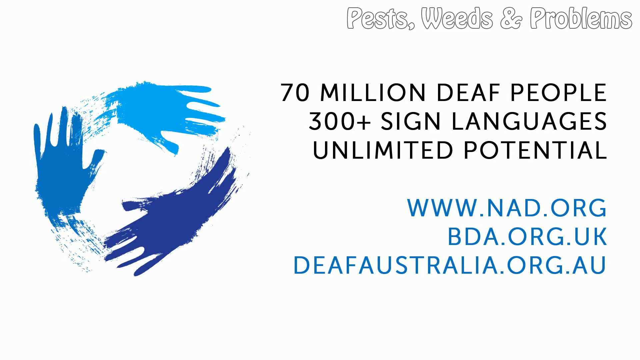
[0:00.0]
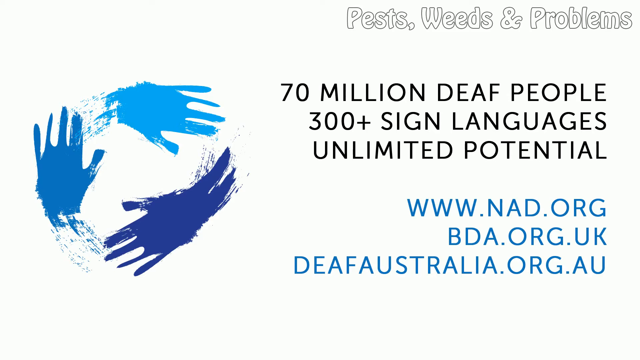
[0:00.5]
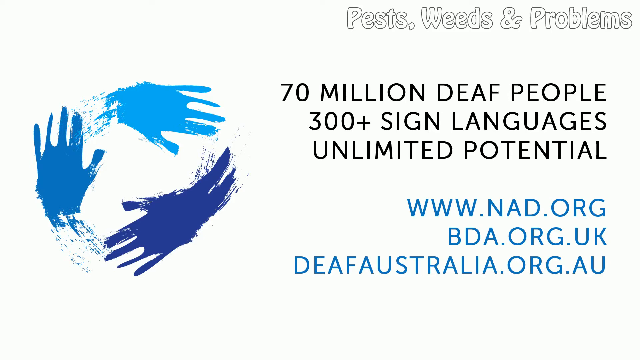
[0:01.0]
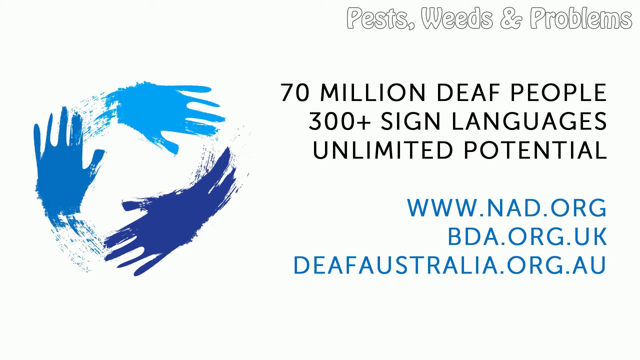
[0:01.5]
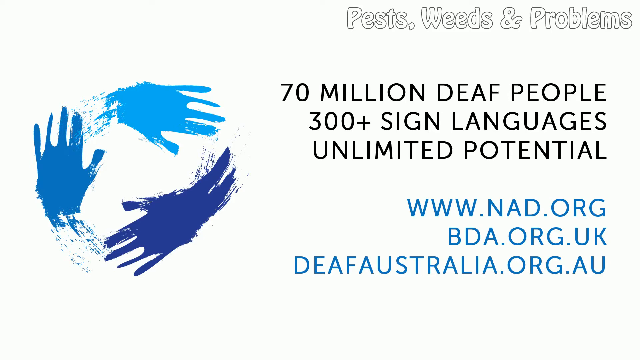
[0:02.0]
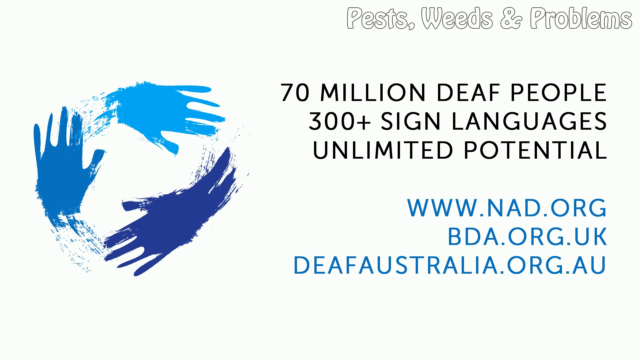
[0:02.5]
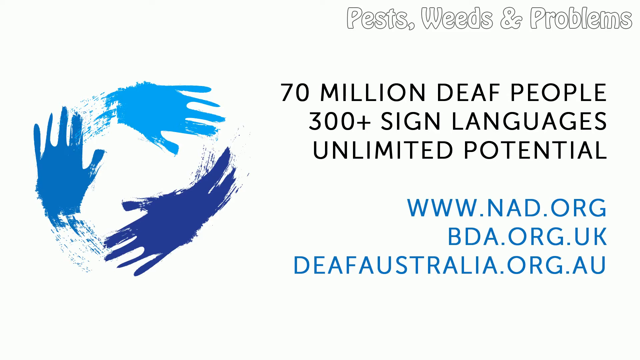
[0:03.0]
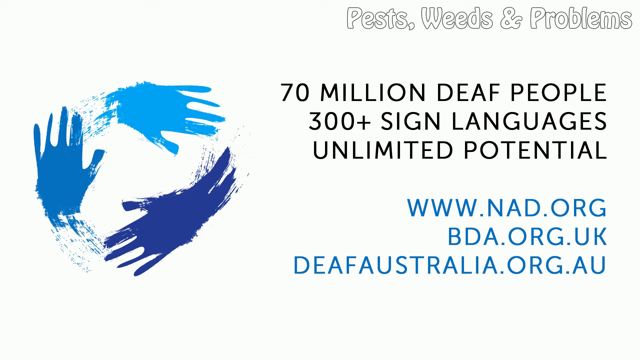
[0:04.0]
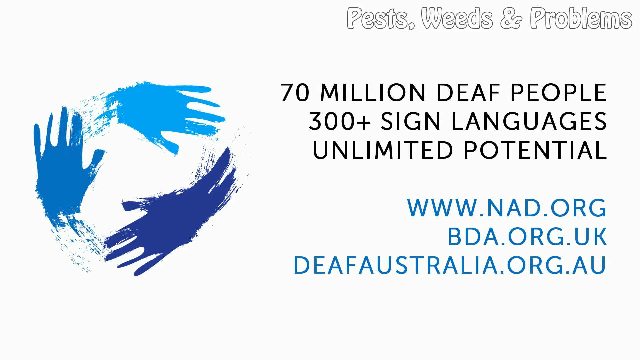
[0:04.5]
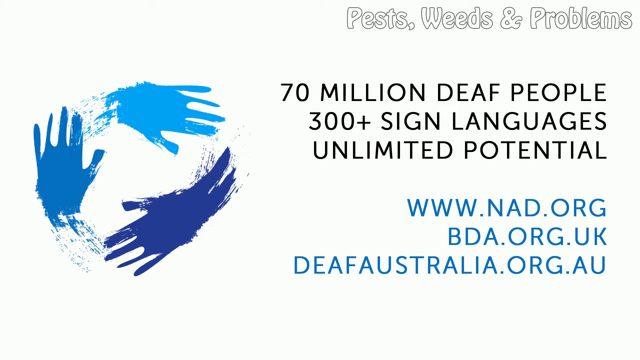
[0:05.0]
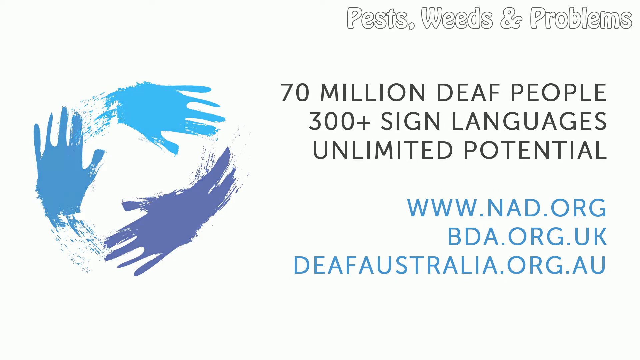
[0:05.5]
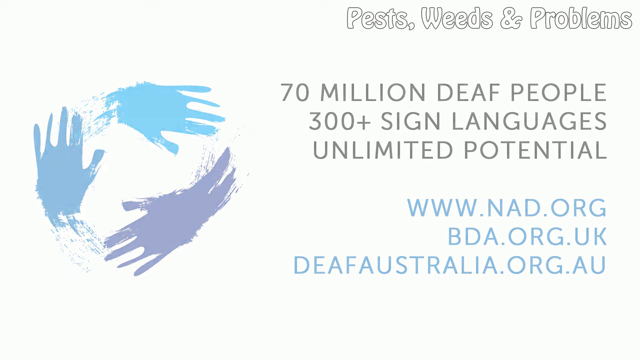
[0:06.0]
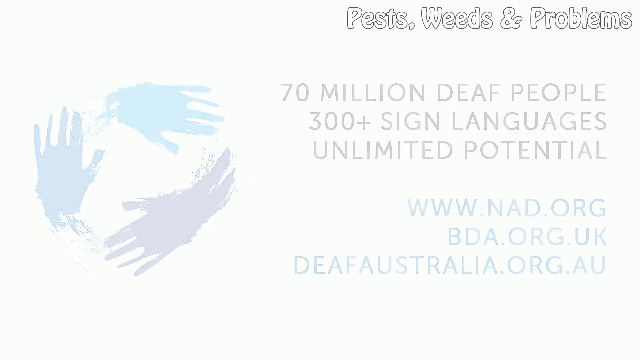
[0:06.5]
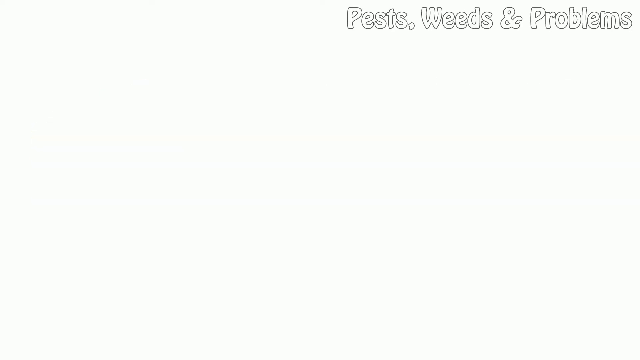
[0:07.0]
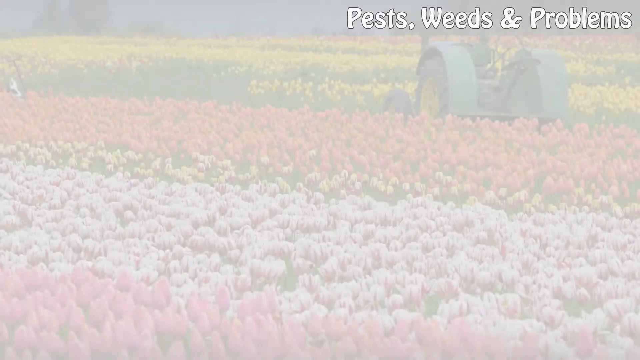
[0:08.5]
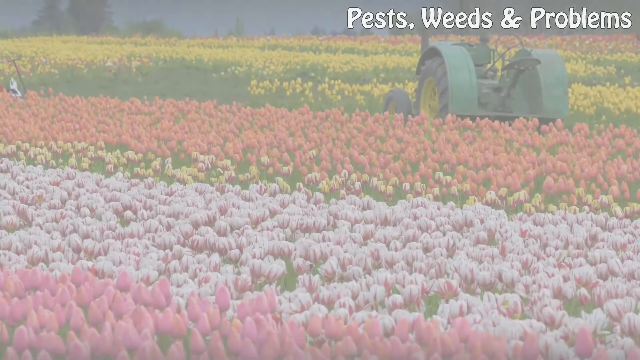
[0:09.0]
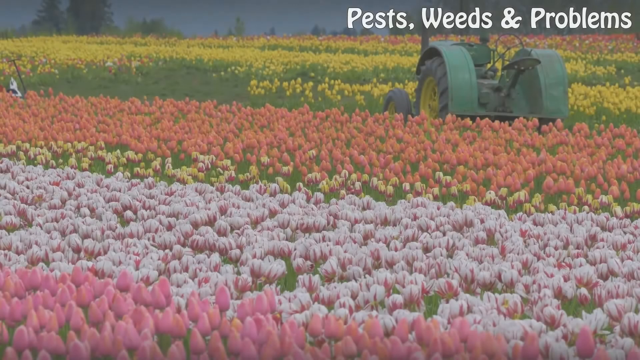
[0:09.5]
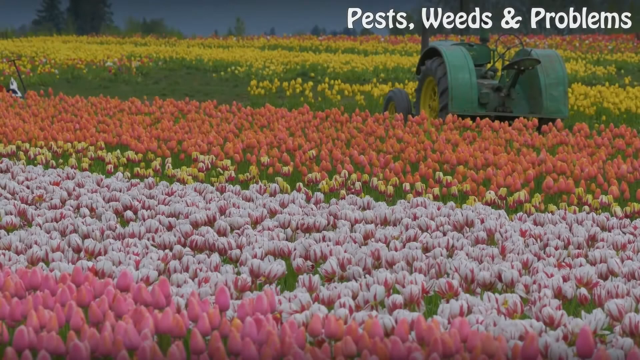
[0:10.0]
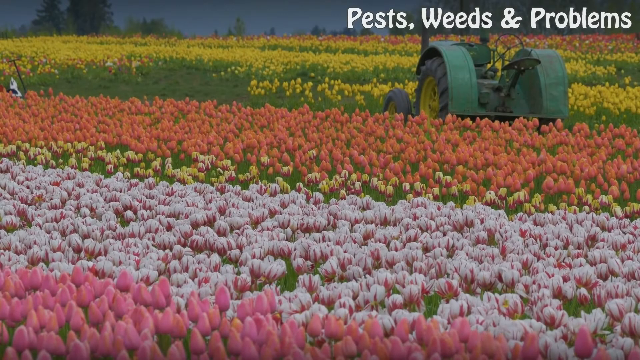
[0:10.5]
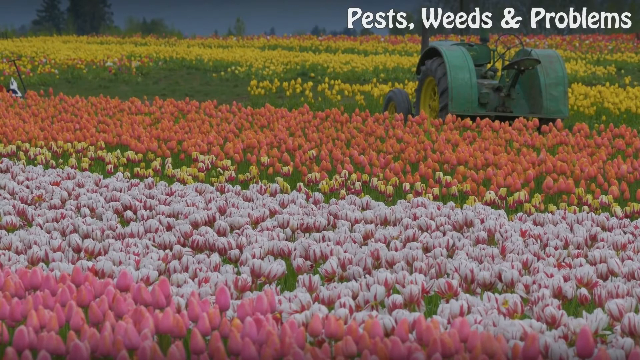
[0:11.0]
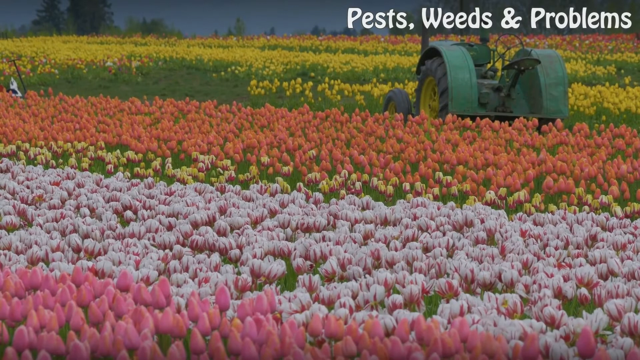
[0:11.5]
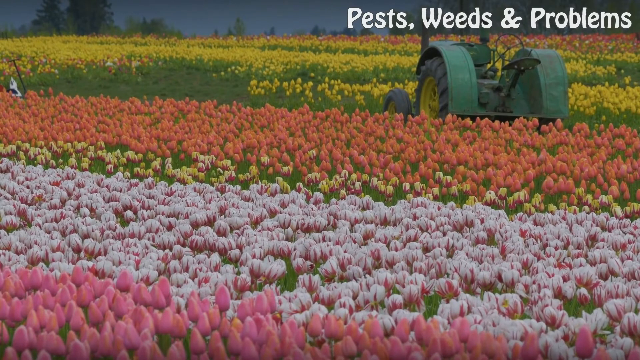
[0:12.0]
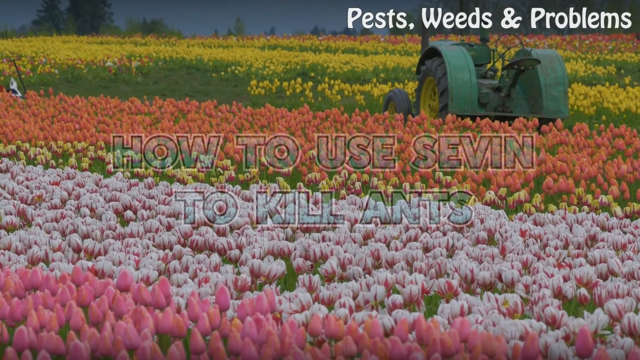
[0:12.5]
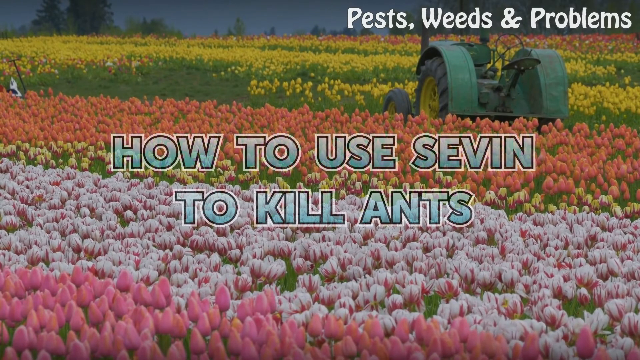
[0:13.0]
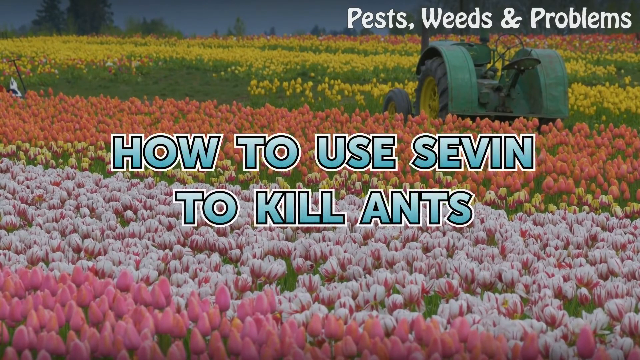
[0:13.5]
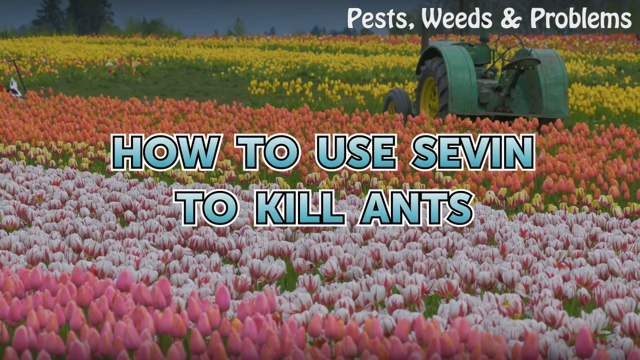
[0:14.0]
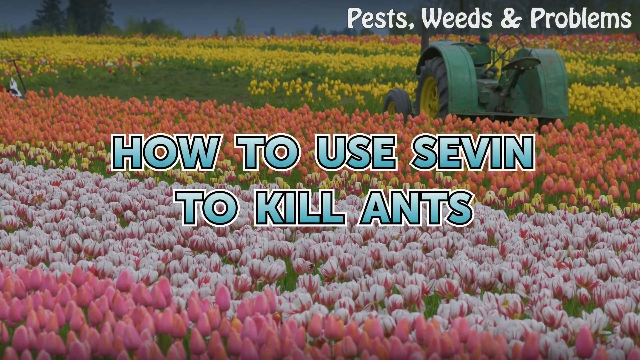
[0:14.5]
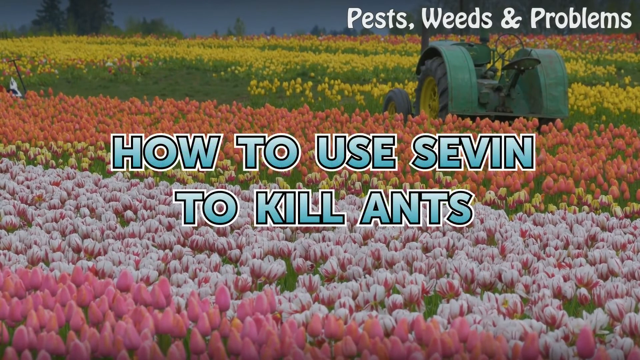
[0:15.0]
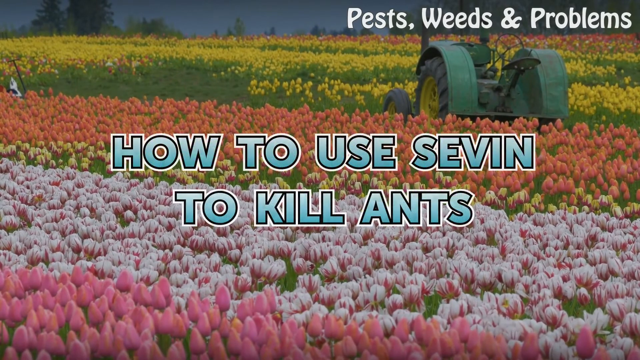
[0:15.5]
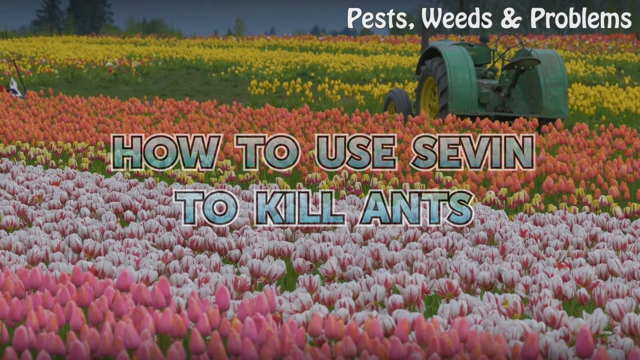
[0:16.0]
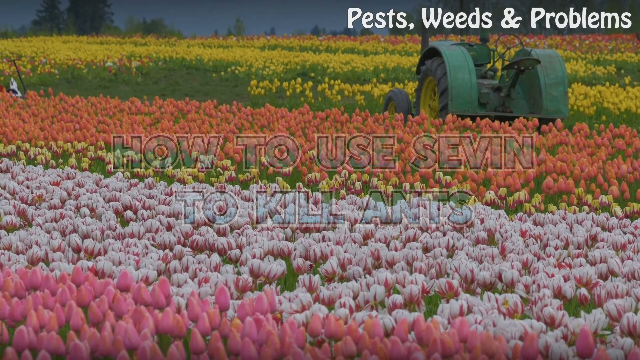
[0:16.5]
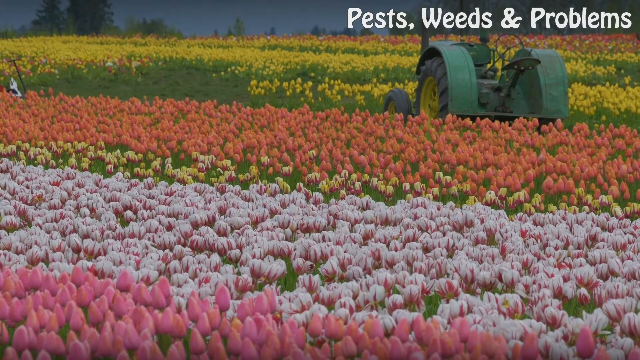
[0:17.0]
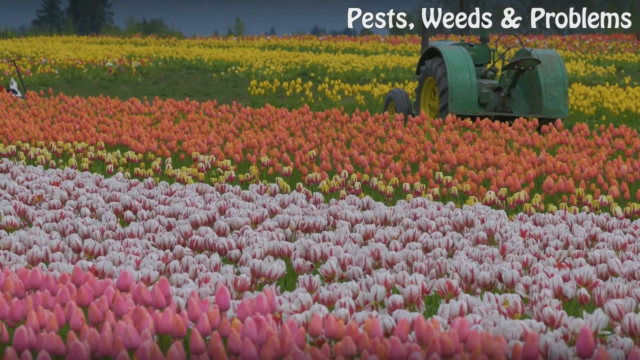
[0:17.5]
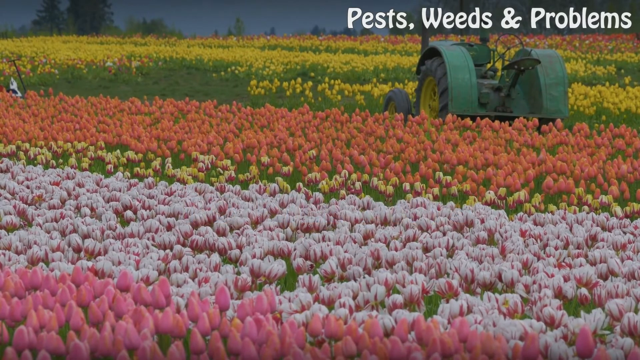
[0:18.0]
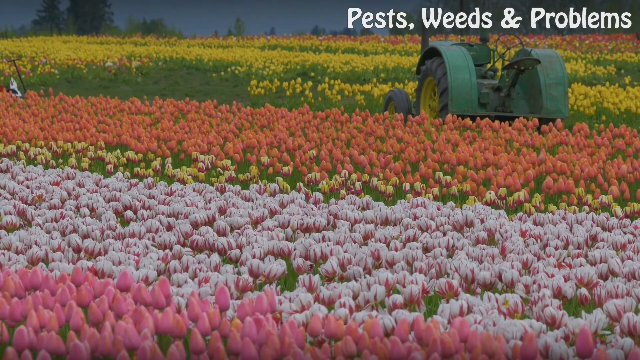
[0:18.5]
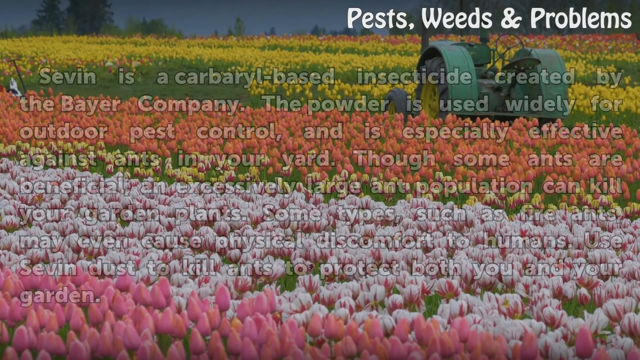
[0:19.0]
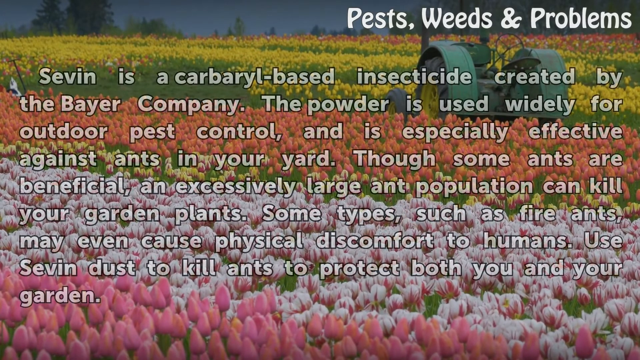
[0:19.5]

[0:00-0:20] White text in the top right of the screen reads "pests, weeds and problems". Underneath it reads "70 million deaf people, 300 plus sign languages, unlimited potential", and below that are three website URLs: "www.nad.org", "bda.org.uk" and "deafaustralia.org.au". On the left is a logo of three blue hands in a circle formation, each with a trail of paint behind it, on a white background. The scene then shows a field of flowers with a tractor in the background, and a title reads "how to use SEVIN to kill ants". The field has many different colours of flowers, with some pink ones and some yellow ones in the background. The tractor is a very old-style, open tractor with no enclosure. It has a large wheel at the back and a small wheel at the front, with yellow rims and dark greyish-black tyres. There is an old-style steering wheel as well as a seat; it is green. A large wheel guard is on either side of the tractor, for the back wheels only. In the foreground are many different flowers in rows: pink ones, white ones with pink undersides, a row of yellow ones with red undersides, and some peach ones, with a lot of green and a bit of green grass in between.